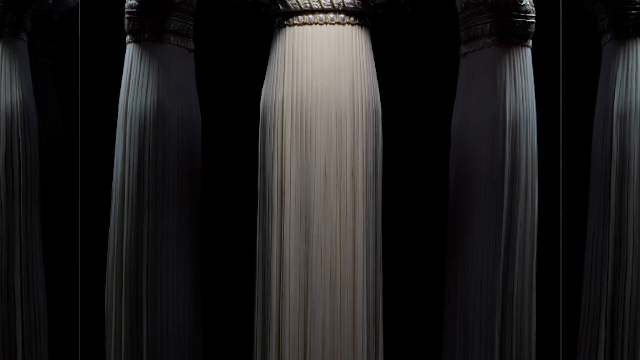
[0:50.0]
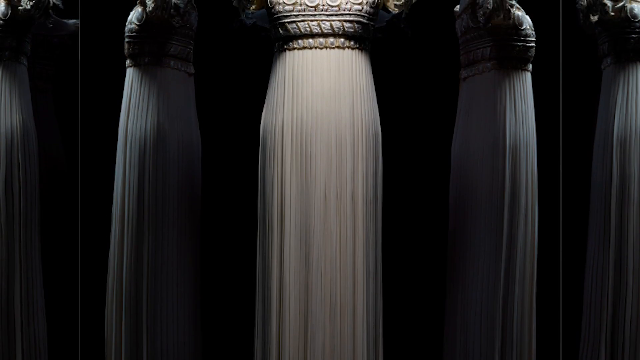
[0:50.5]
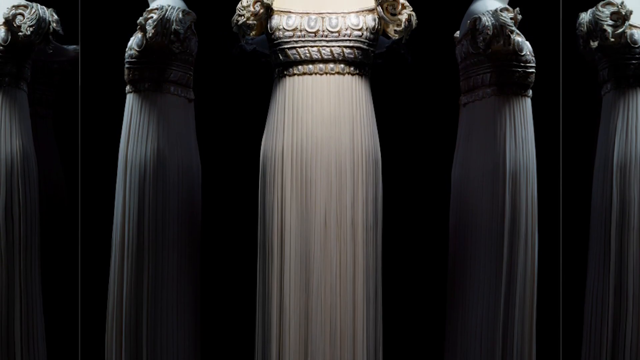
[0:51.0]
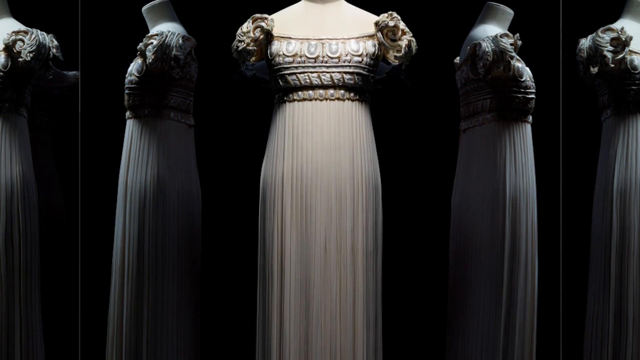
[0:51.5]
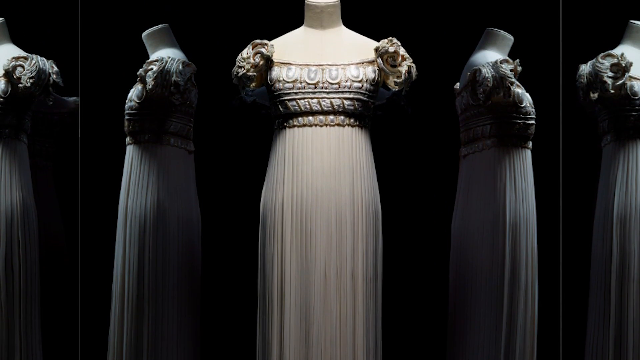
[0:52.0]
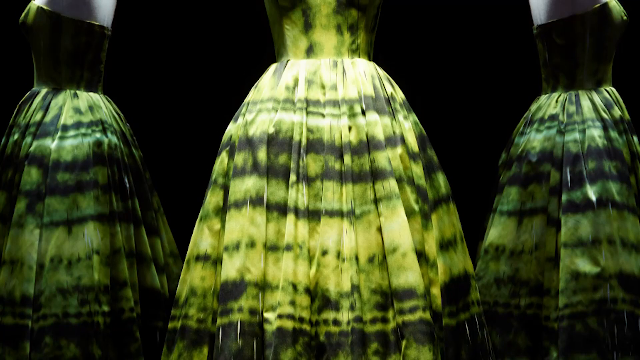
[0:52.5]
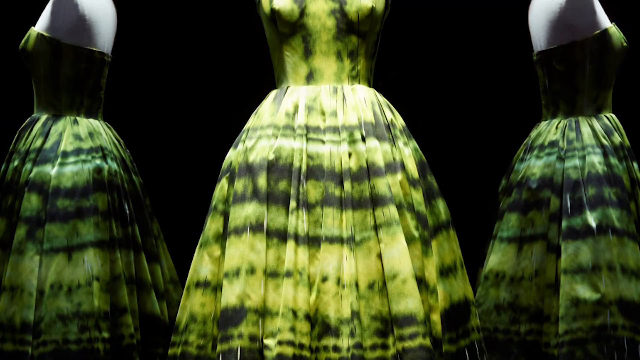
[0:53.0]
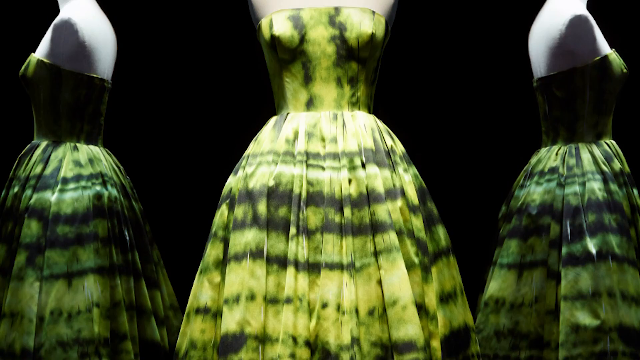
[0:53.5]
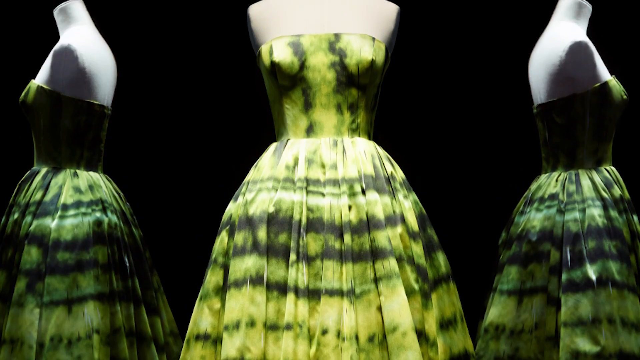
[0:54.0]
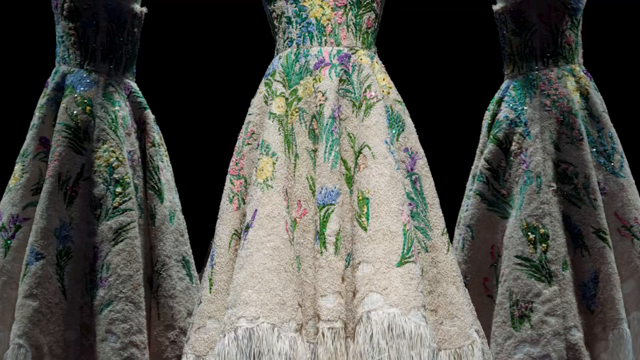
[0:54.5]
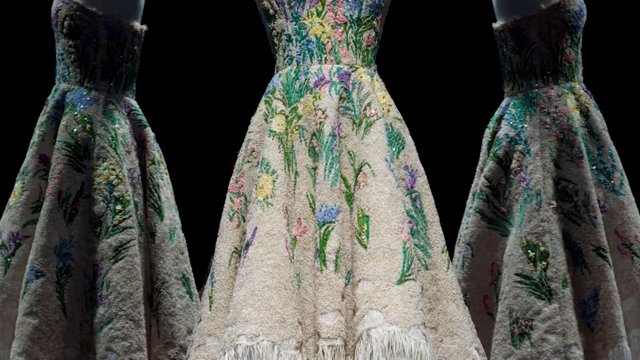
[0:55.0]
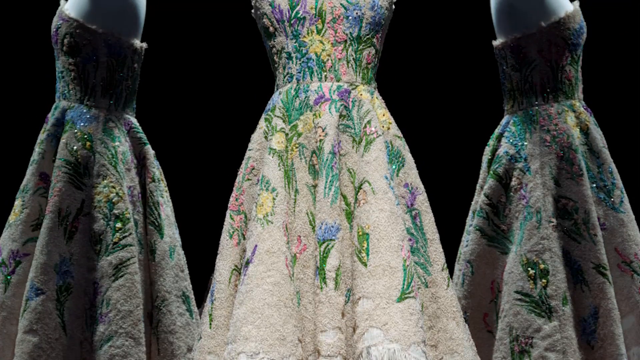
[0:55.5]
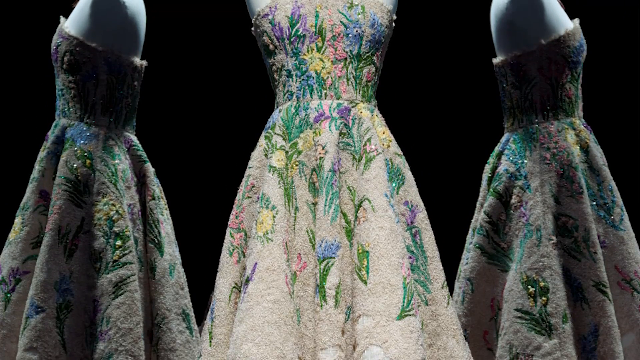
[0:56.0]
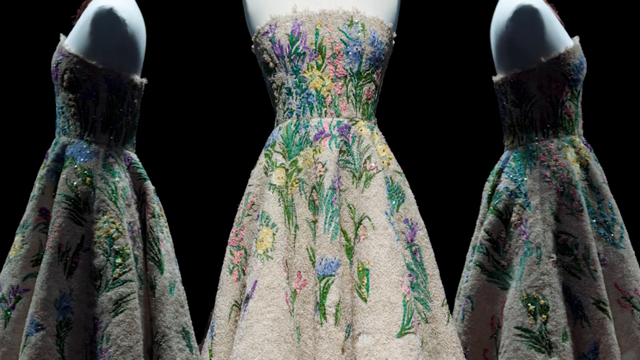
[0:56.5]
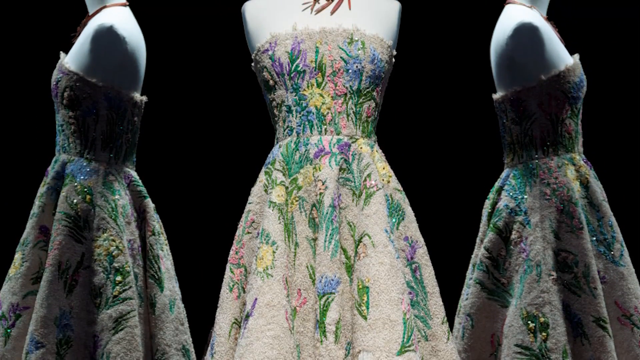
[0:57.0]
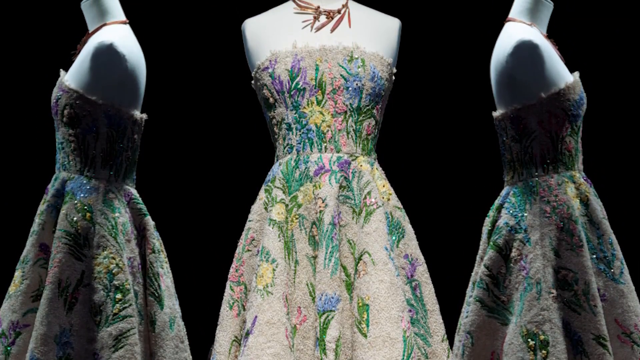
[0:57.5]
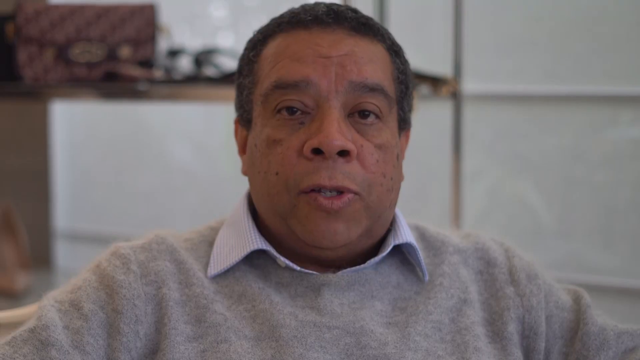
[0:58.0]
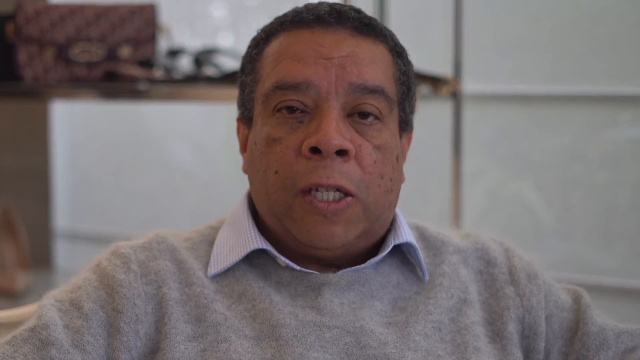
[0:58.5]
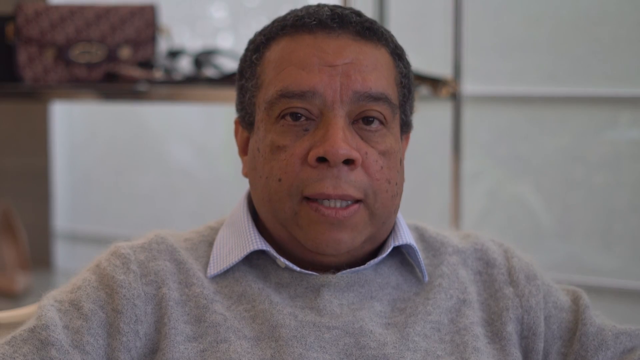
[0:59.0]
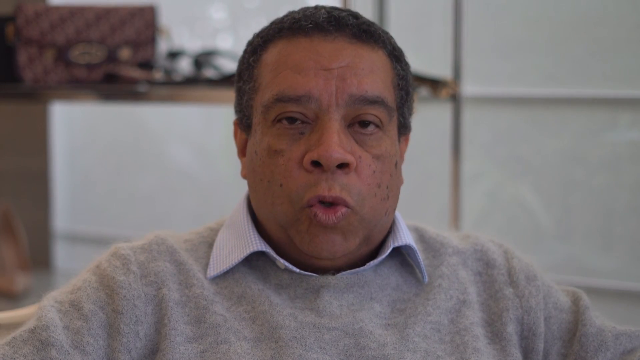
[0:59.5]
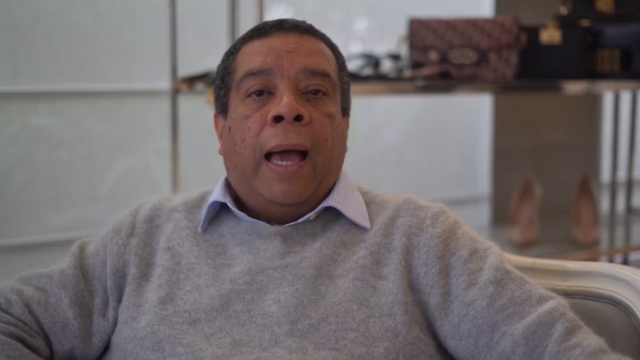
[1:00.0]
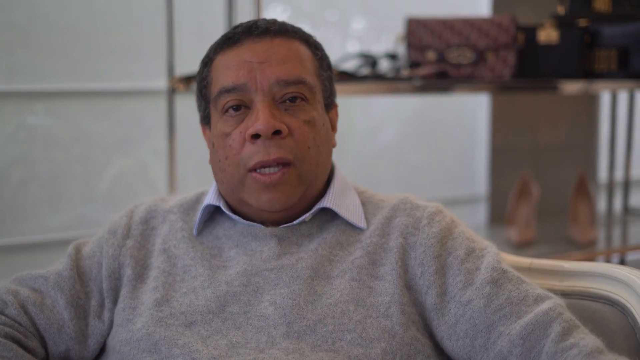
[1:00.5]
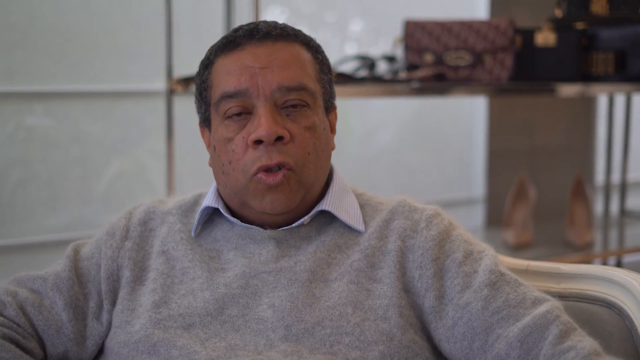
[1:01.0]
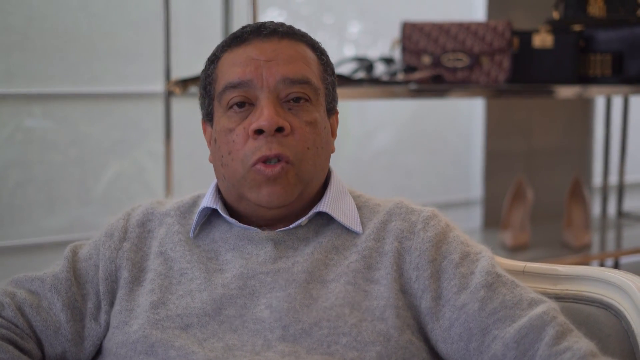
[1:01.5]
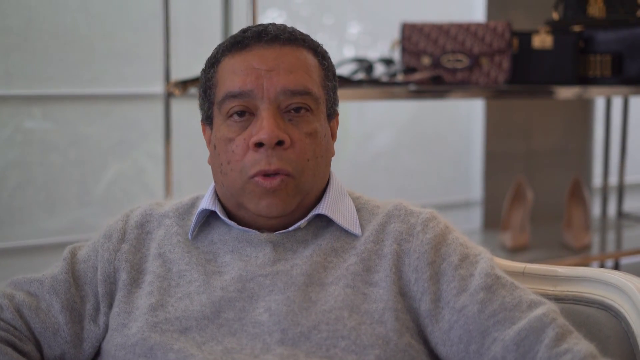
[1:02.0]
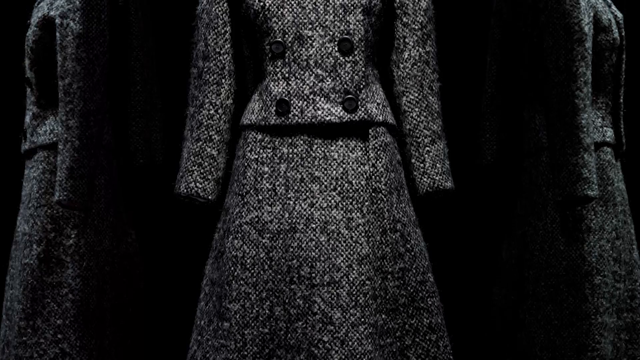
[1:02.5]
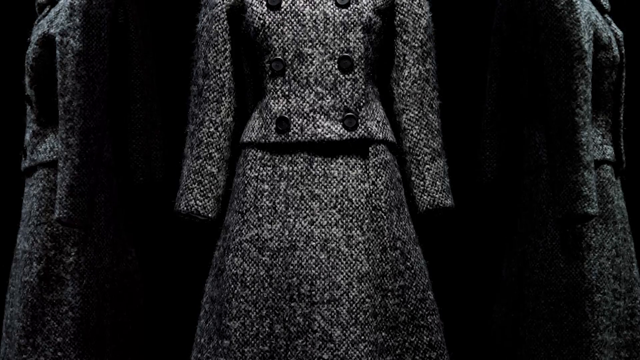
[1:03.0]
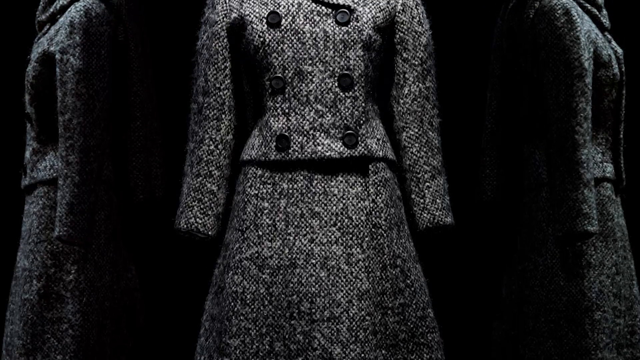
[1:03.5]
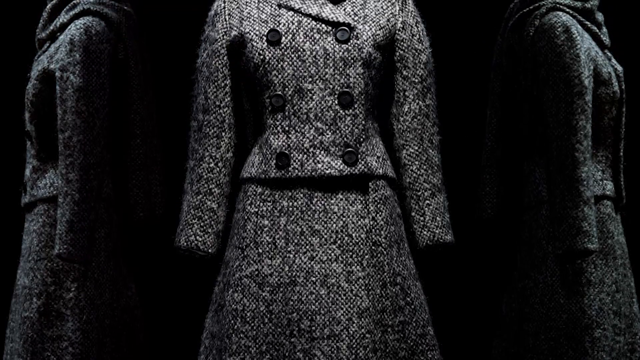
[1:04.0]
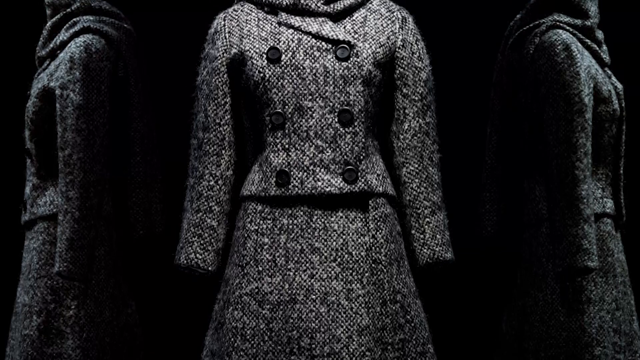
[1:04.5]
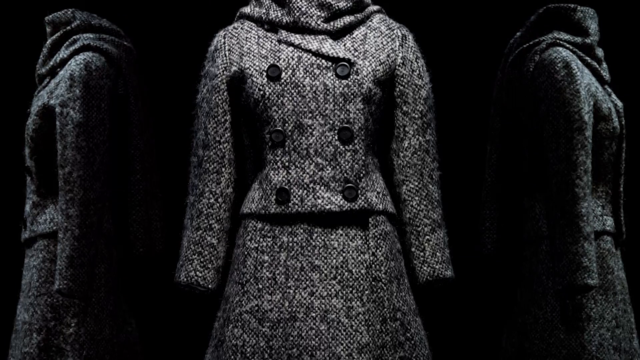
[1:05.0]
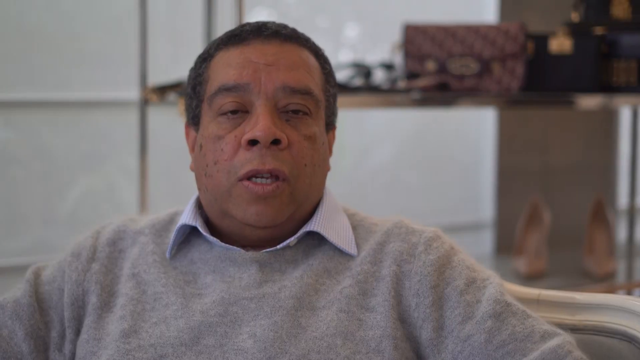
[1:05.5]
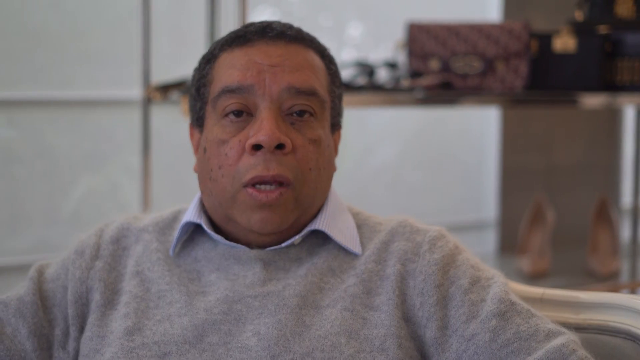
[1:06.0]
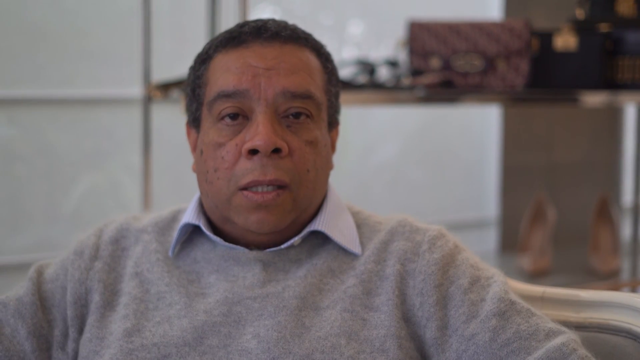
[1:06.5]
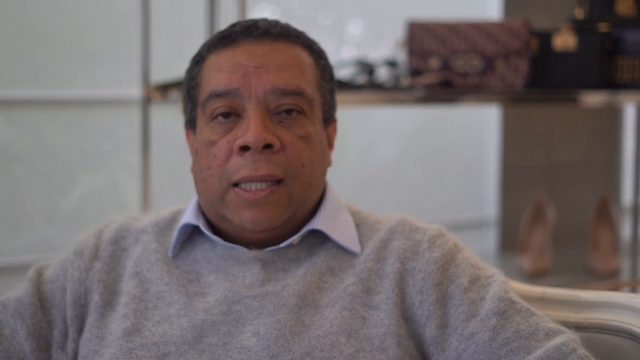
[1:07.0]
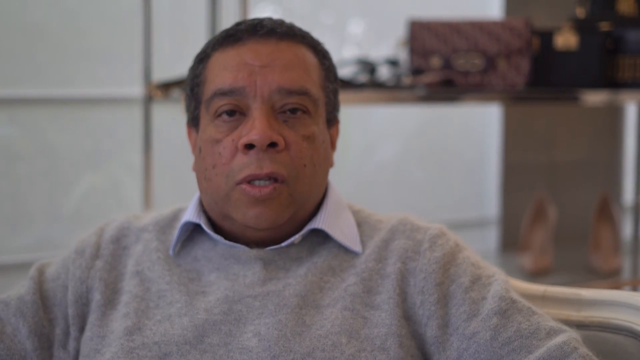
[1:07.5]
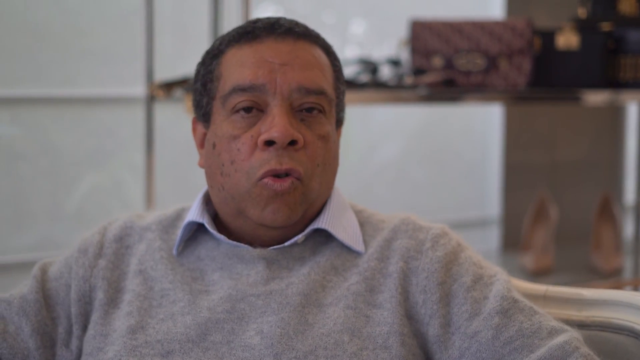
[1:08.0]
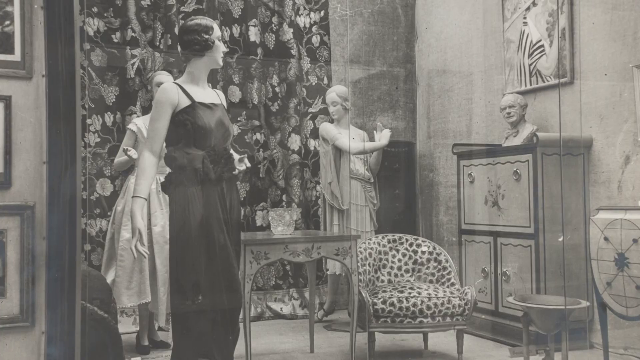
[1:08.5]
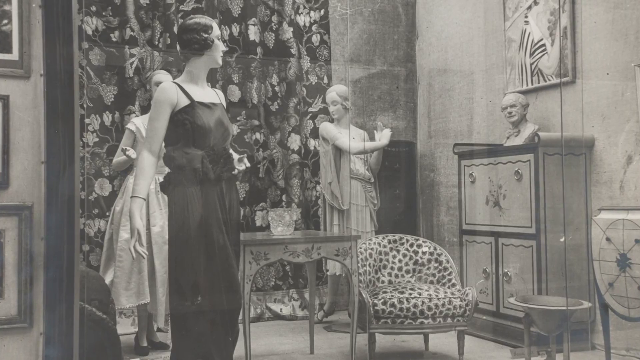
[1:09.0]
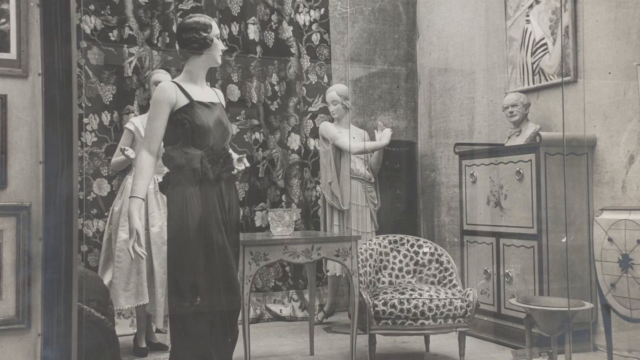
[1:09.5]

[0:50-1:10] Against an all-black screen, dresses are highlighted one by one: first a white dress, then a black dress with alternating black and green stripes, one overlapping the other, on an all-black background. Soon after comes a pink dress with several paintings that look like plants and nature, green trees and pieces of plants, and a mannequin hanging on a black screen. The person who was wearing gray clothes keeps talking. Right after, a silver dress appears that looks like it was made of armor from previous years, set against a black screen that highlights it. The man keeps talking and showing things. Then comes an image of what appear to be some mannequins facing each other in a very old, black-and-white setting.